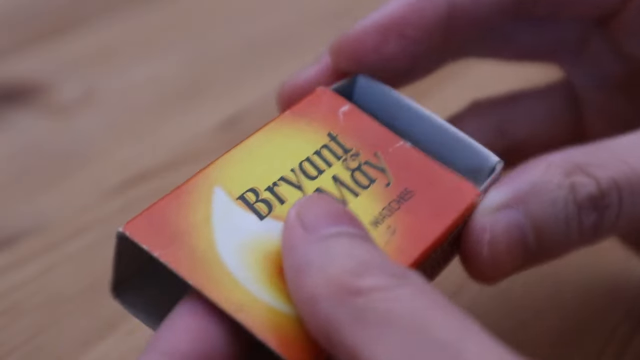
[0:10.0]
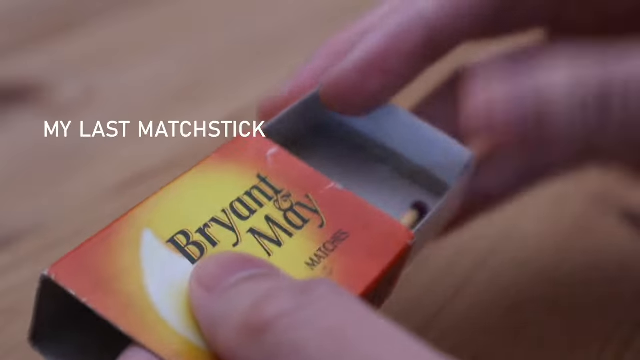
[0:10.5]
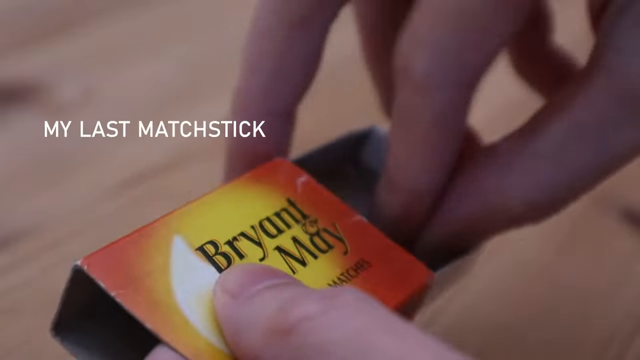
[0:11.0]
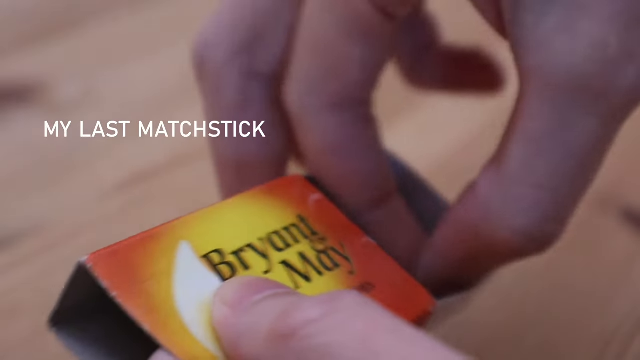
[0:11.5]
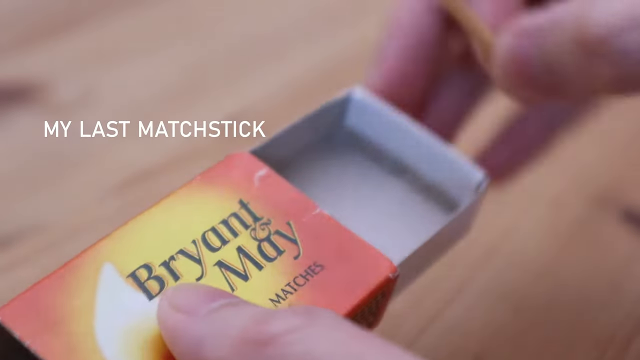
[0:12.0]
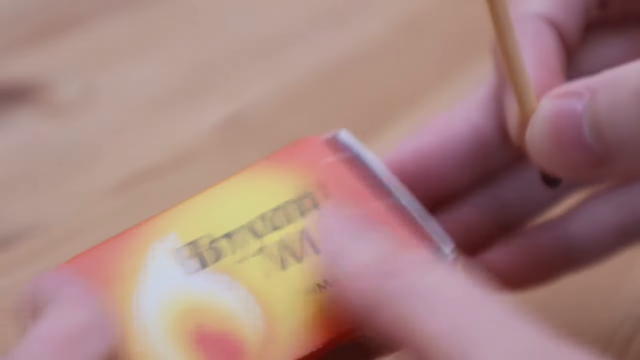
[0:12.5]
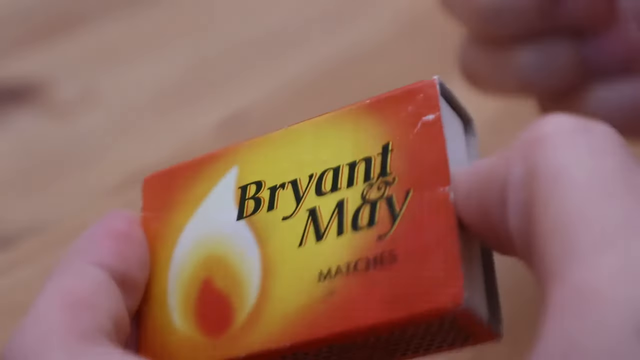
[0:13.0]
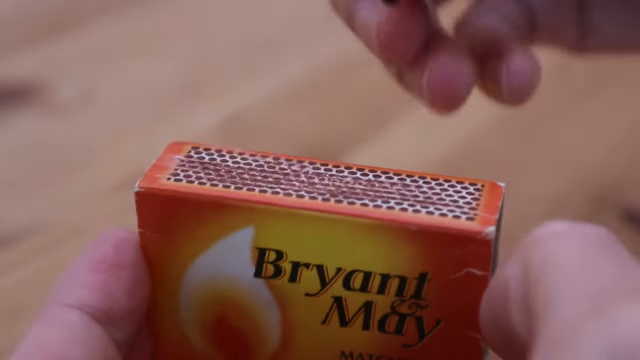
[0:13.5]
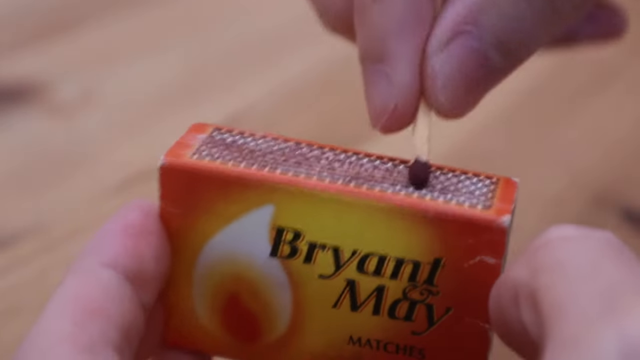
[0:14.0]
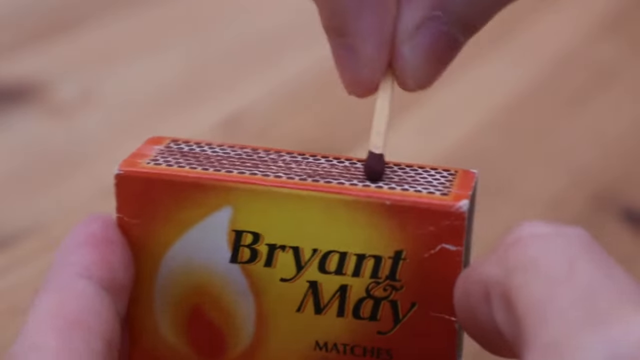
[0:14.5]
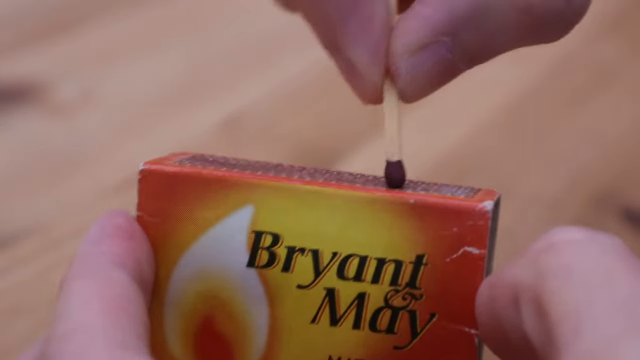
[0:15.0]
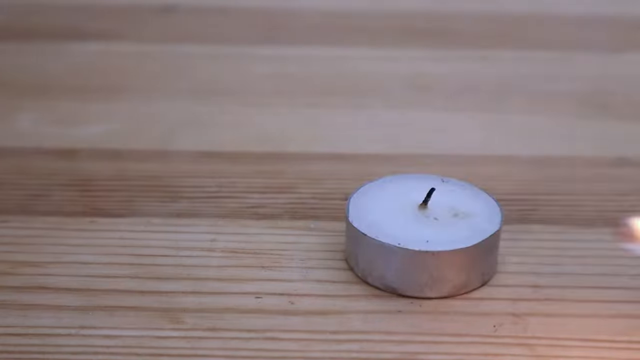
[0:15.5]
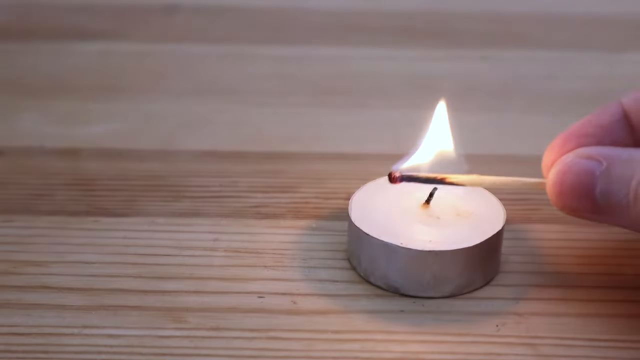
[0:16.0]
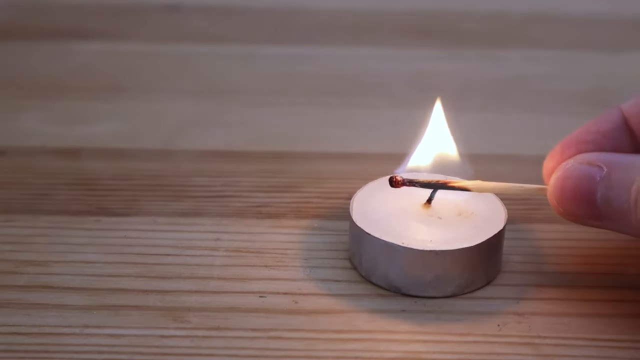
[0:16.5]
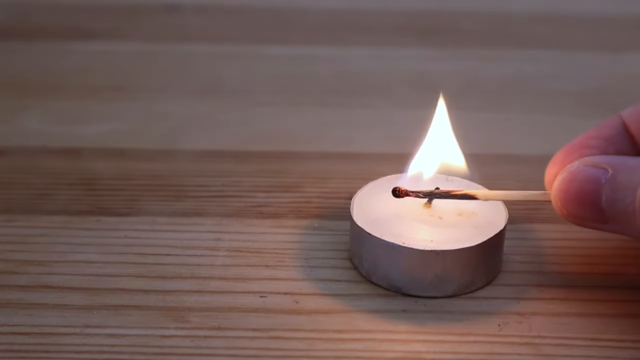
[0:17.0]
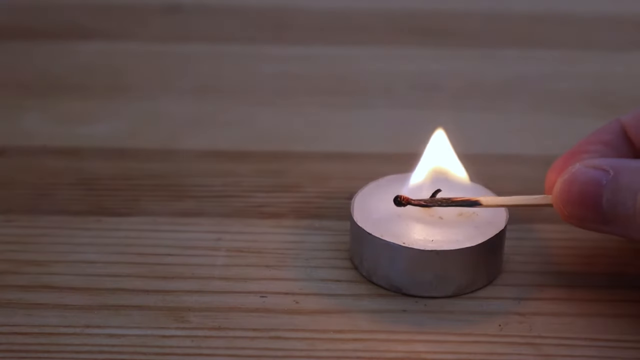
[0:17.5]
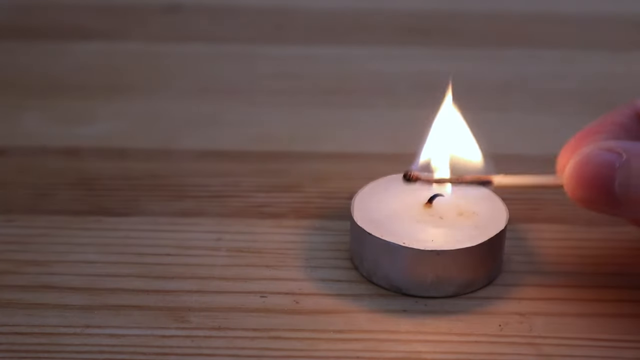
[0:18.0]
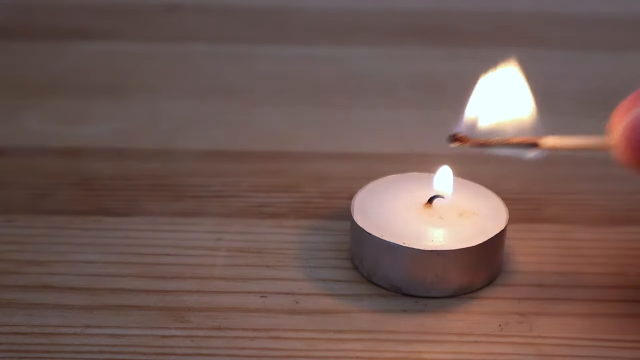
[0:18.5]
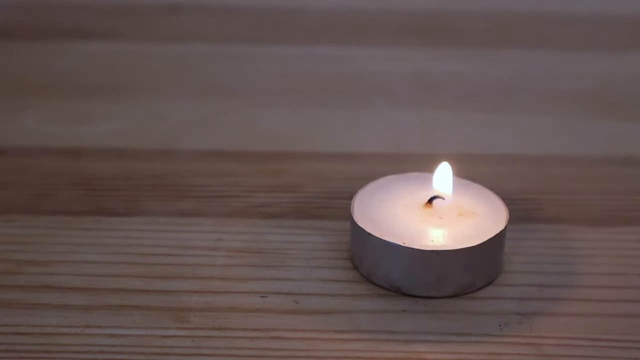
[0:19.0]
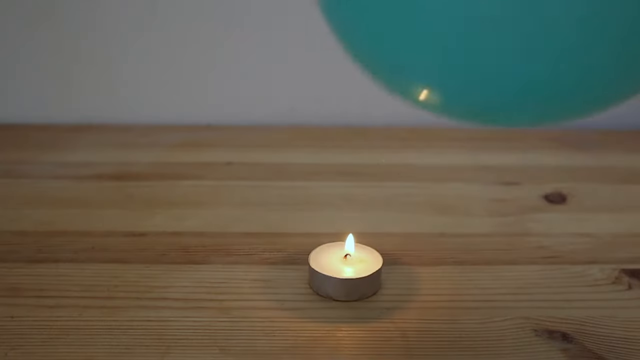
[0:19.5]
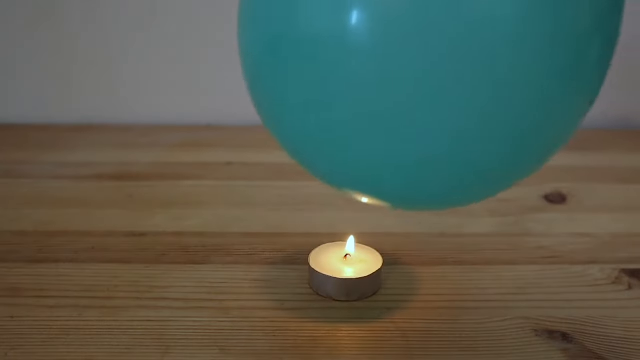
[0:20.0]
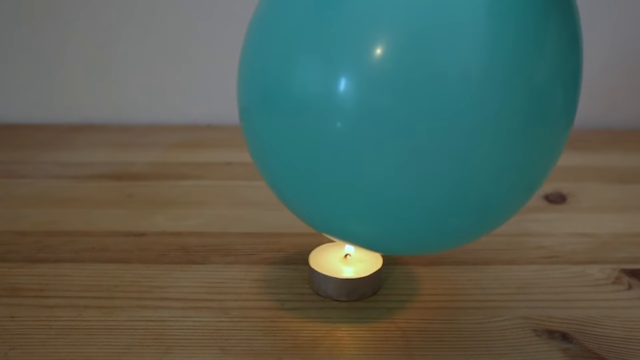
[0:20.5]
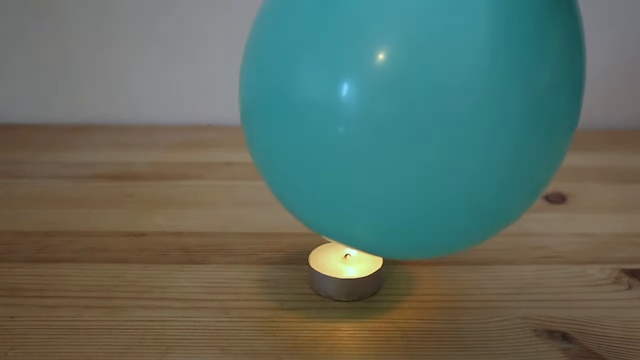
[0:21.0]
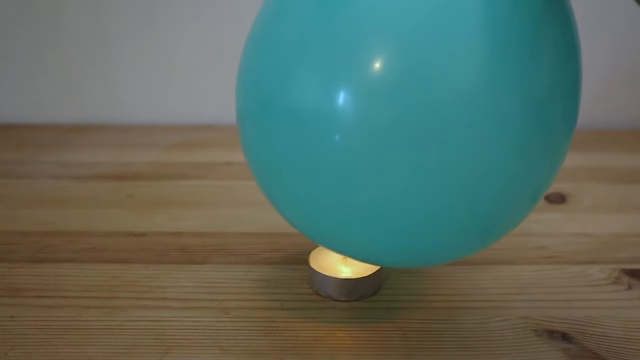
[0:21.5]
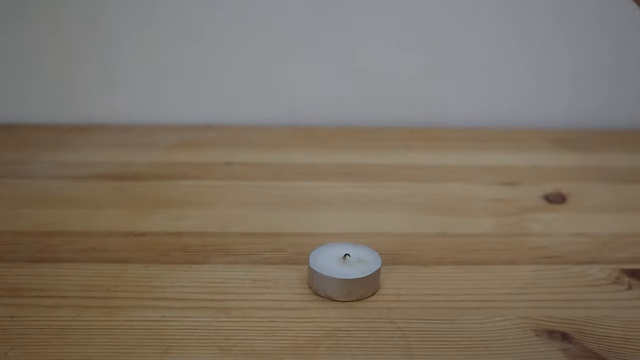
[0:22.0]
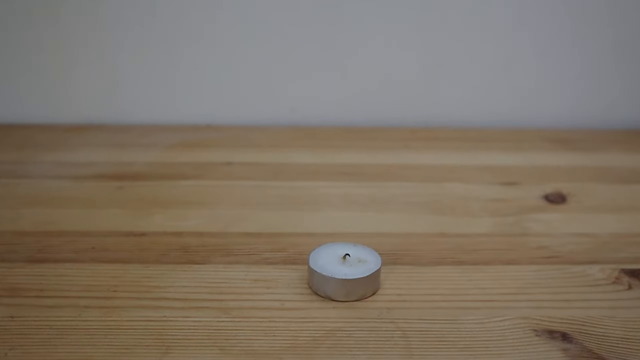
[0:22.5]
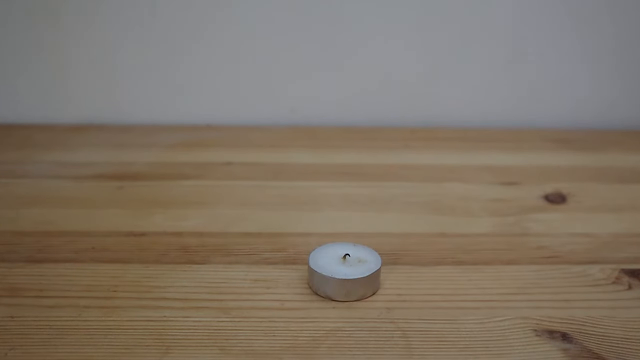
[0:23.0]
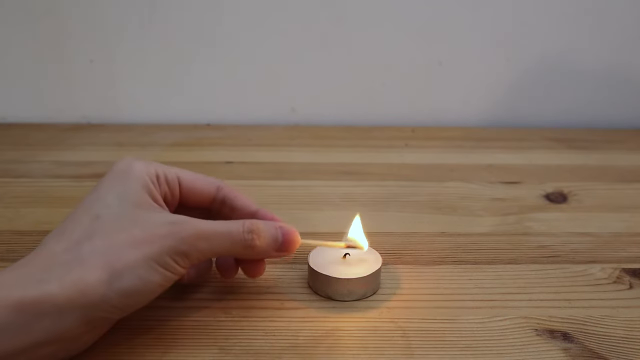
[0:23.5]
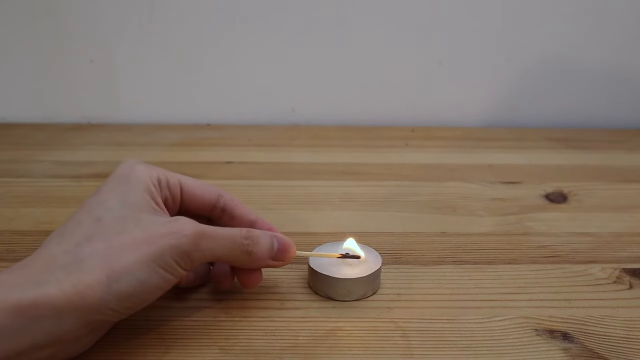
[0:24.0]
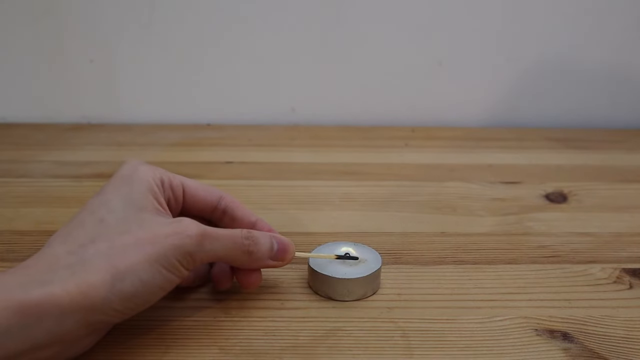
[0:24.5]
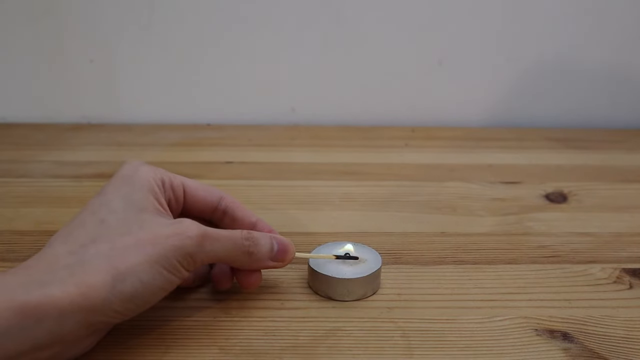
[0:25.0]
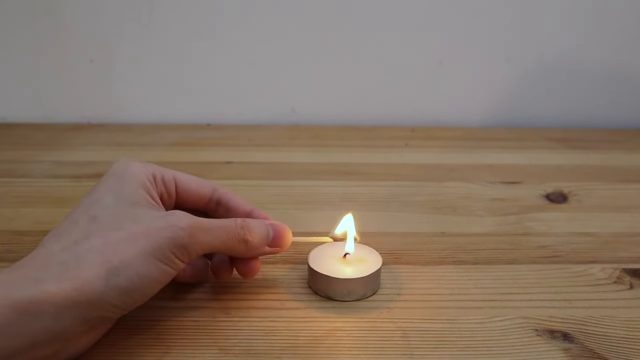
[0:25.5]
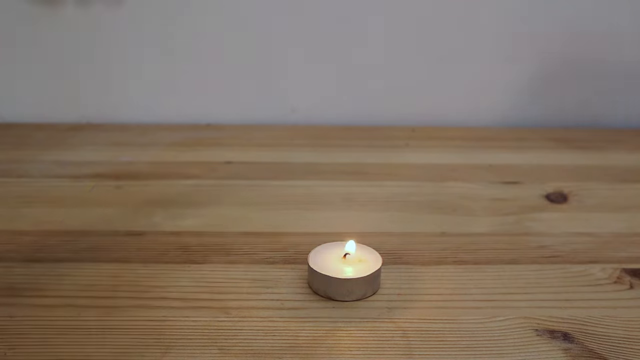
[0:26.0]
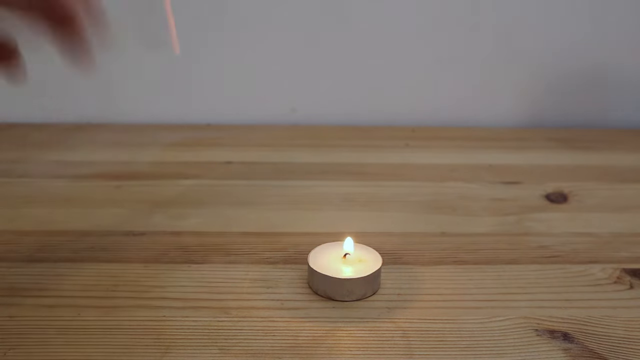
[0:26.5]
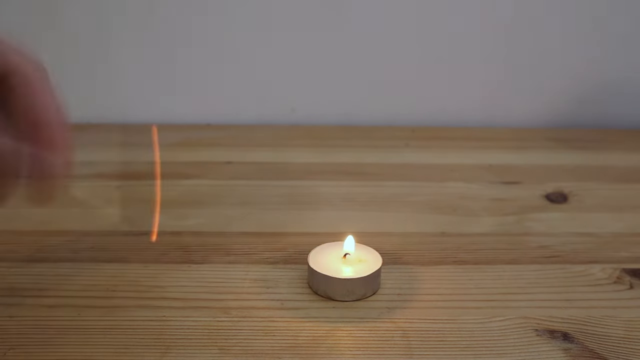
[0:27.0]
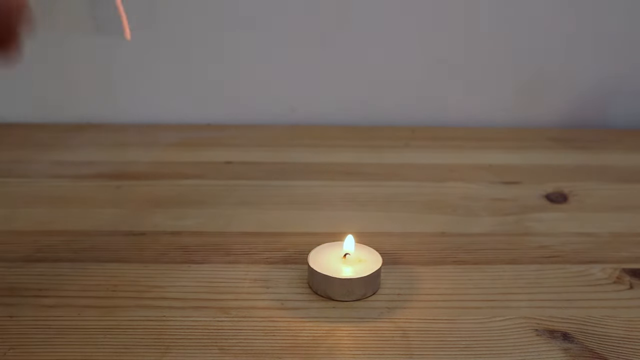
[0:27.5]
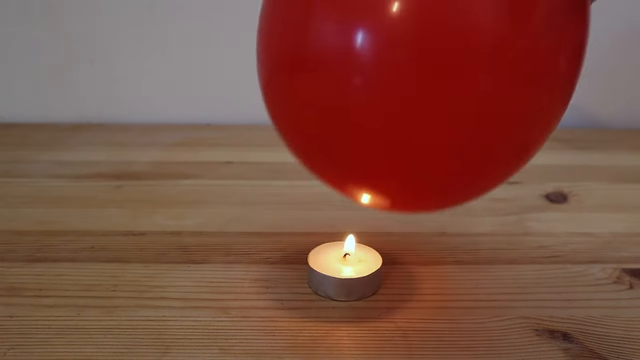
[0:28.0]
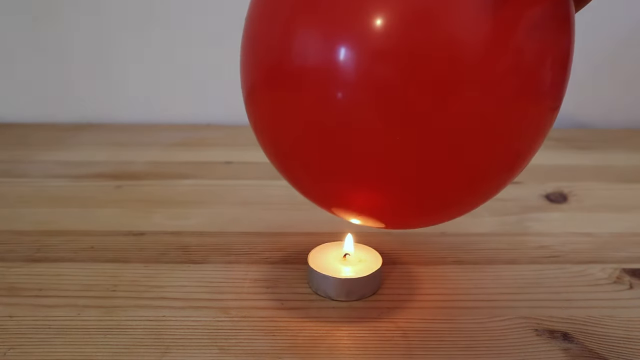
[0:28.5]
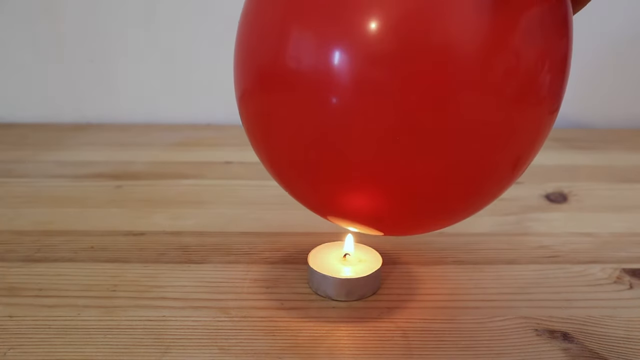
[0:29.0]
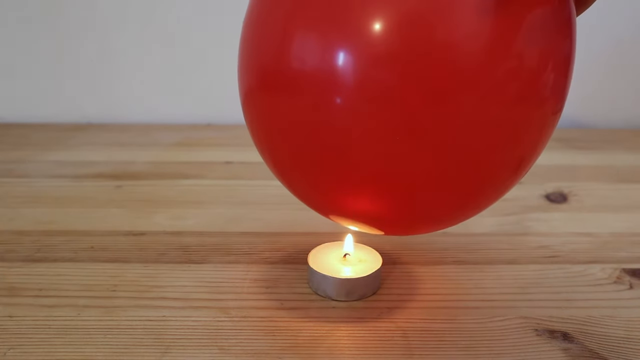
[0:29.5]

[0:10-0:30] The person opens a matchbox with both hands. The matchbox is orange, with a design of a lit match drawn on it as its logo; the area closer to the match is yellow, and the fire is a bit yellow with more yellow around it. The matchbox has "Bryant and May Matches" written on it. When the box is opened, the inner container is white and holds only a single matchstick. The person takes out the matchstick, and white text on the left side reads "My last match stick". He flips the matchbox over, strikes the match across its side, and the match lights and burns. He puts the flame to a small candle on the table, which is inside a silver piece, and the candle is lit. The person puts the matchstick away, then takes the green balloon, inflated without water, and holds it over the candle flame. The balloon bursts. He then uses another matchstick to light the candle again in order to test the red balloon.